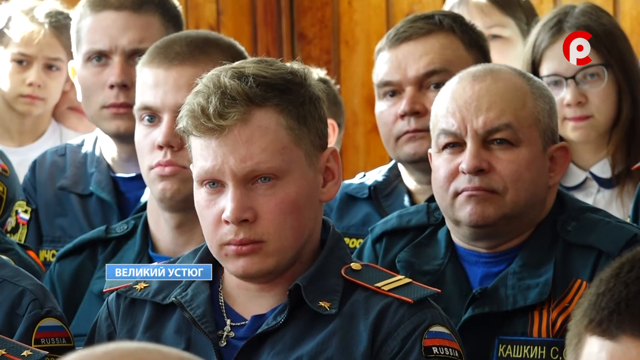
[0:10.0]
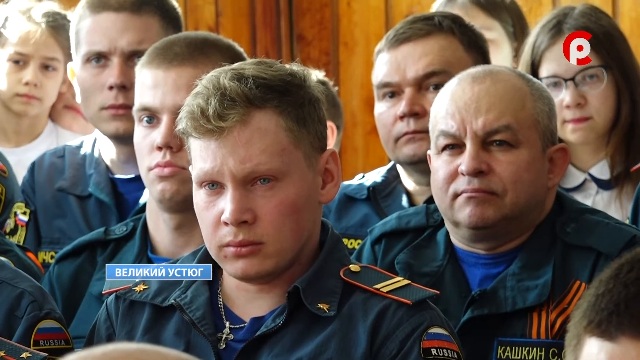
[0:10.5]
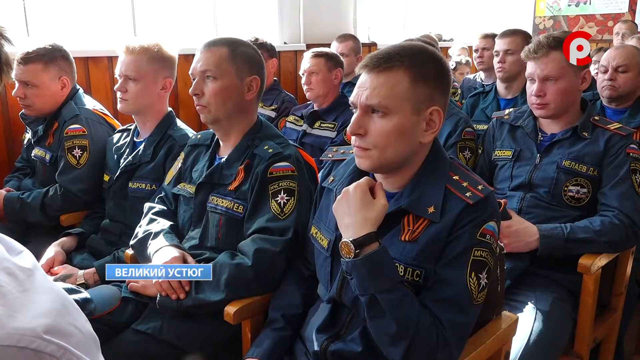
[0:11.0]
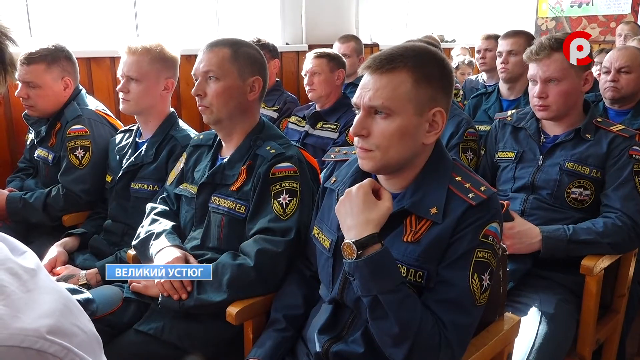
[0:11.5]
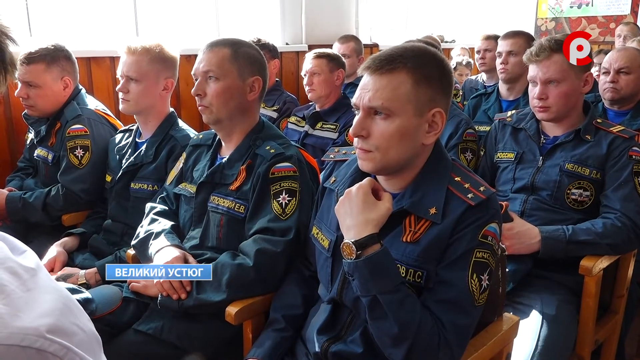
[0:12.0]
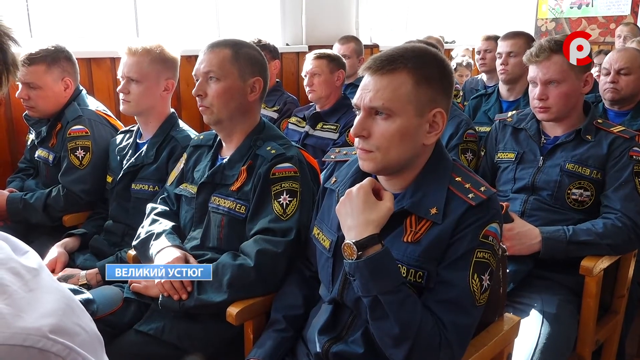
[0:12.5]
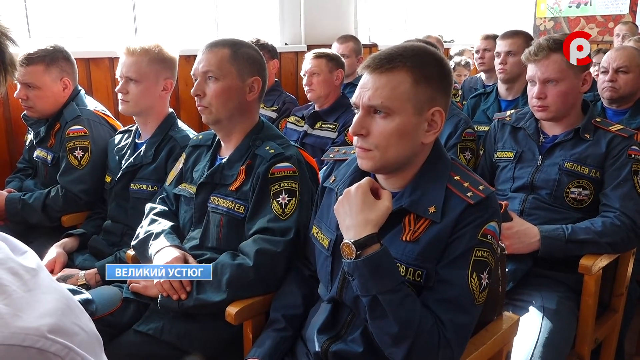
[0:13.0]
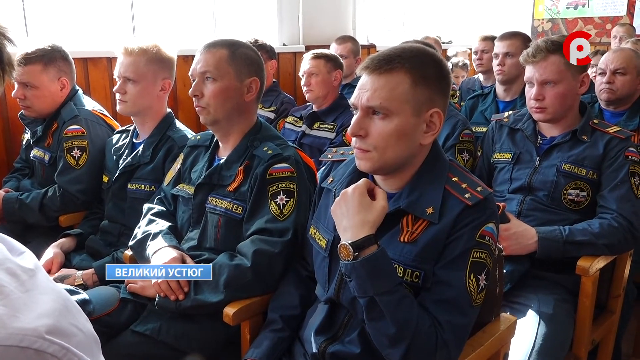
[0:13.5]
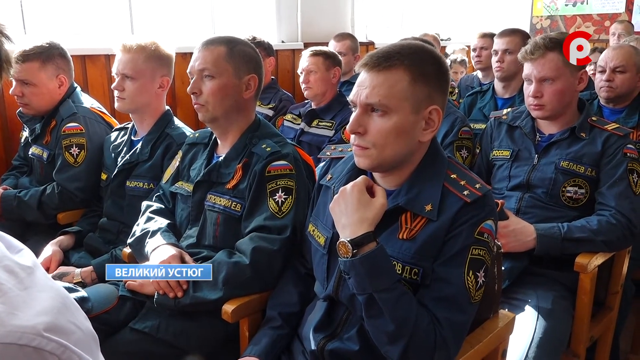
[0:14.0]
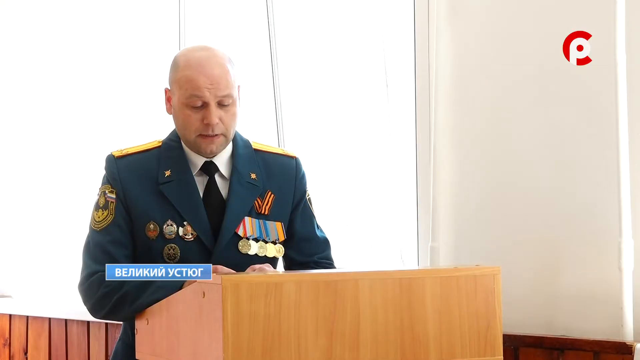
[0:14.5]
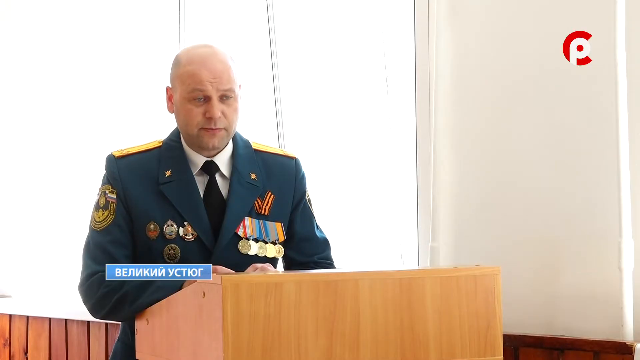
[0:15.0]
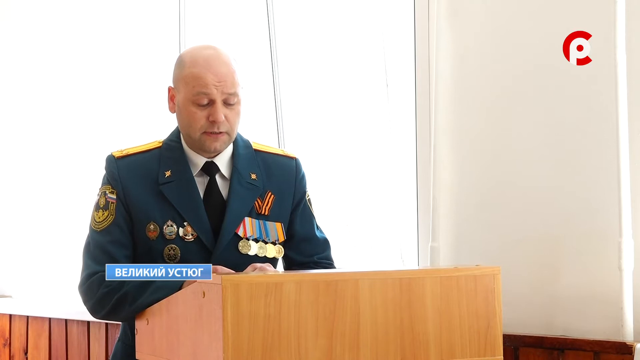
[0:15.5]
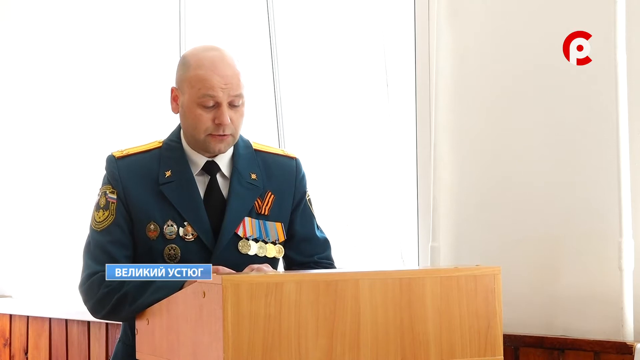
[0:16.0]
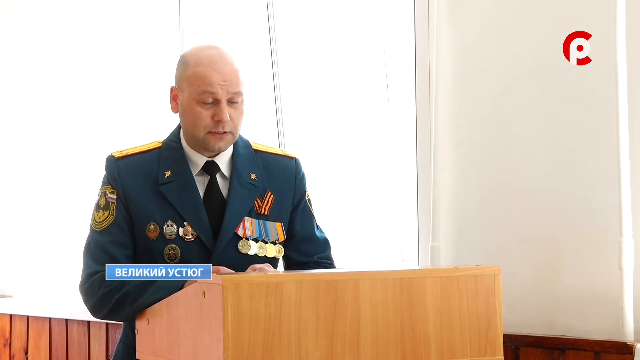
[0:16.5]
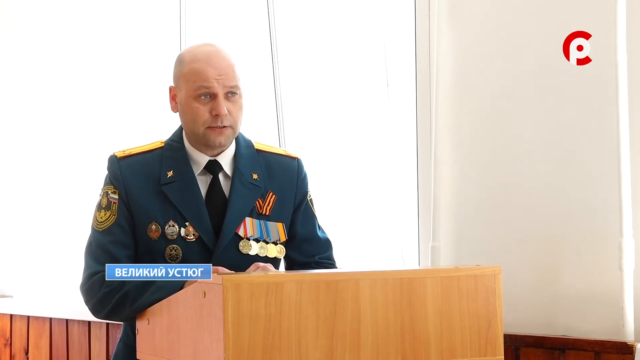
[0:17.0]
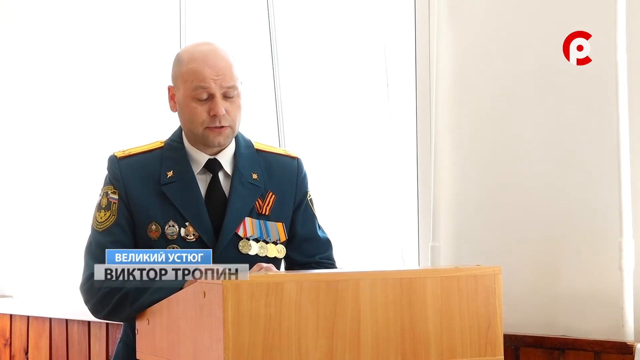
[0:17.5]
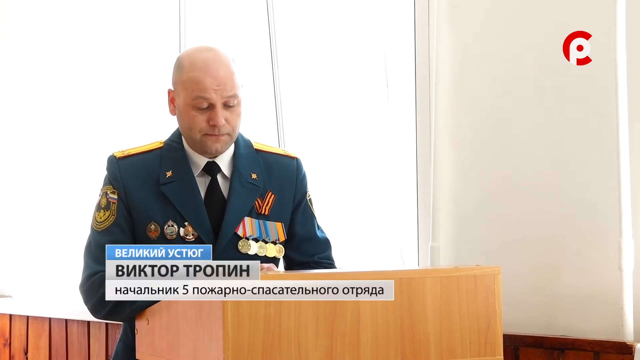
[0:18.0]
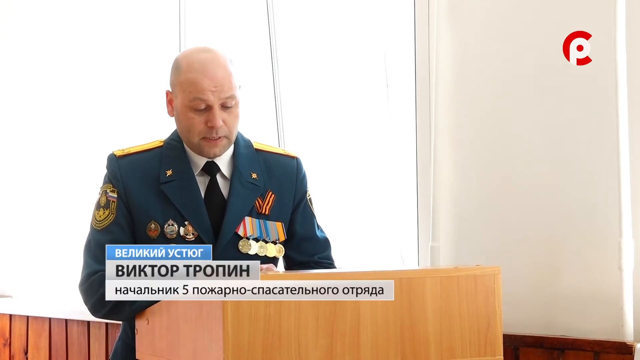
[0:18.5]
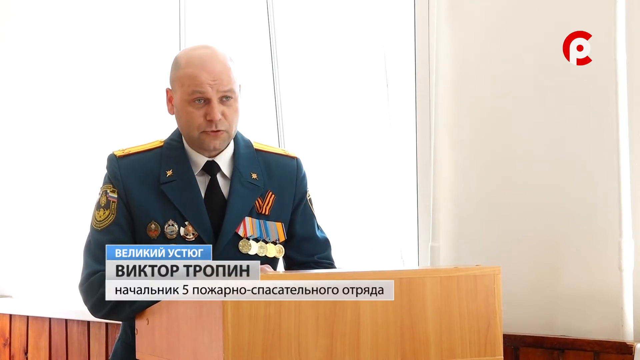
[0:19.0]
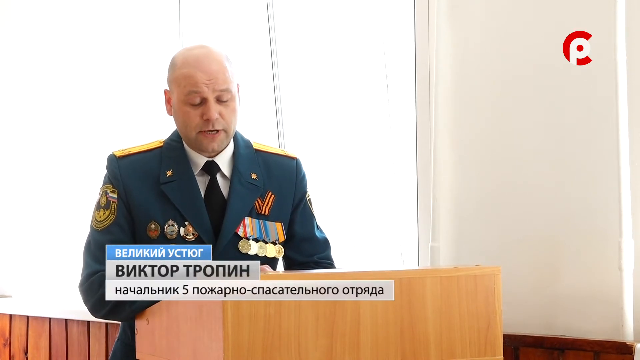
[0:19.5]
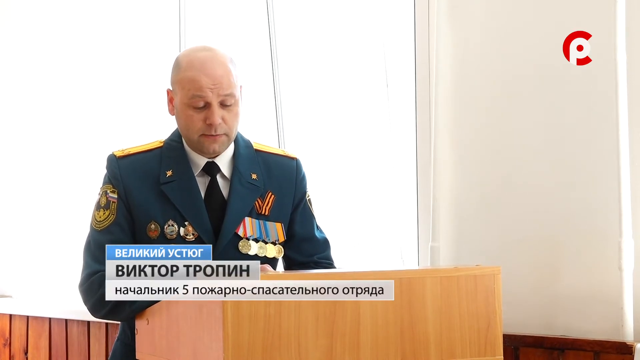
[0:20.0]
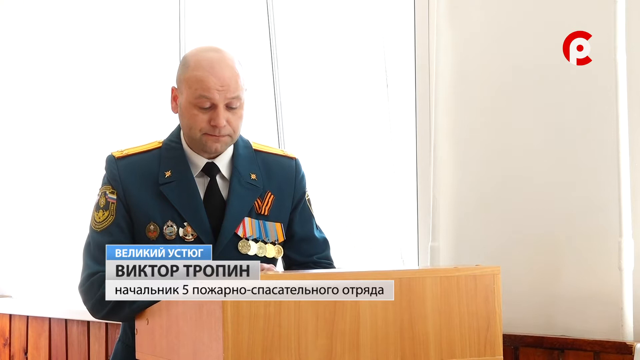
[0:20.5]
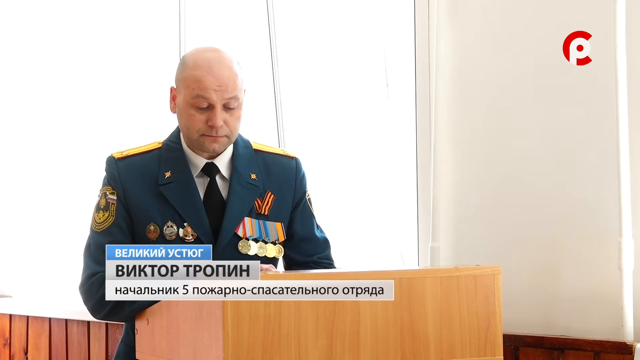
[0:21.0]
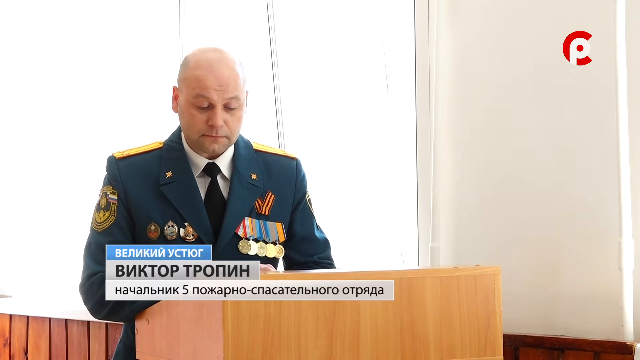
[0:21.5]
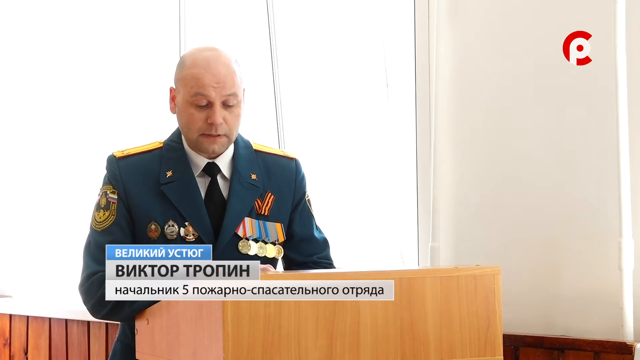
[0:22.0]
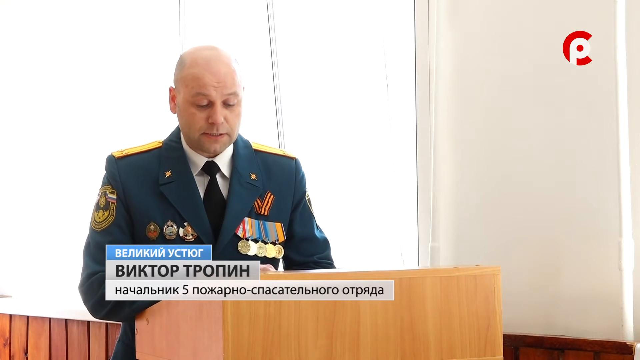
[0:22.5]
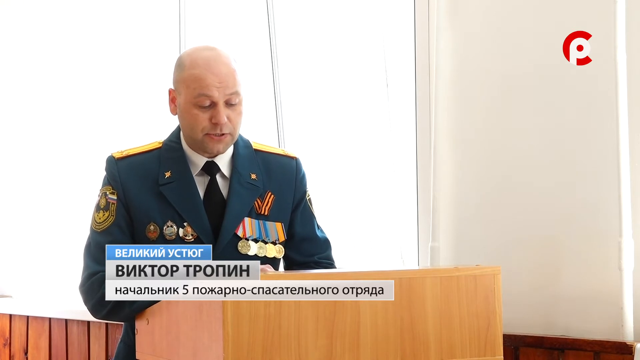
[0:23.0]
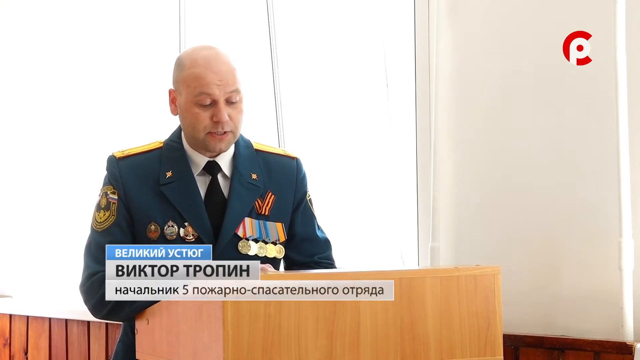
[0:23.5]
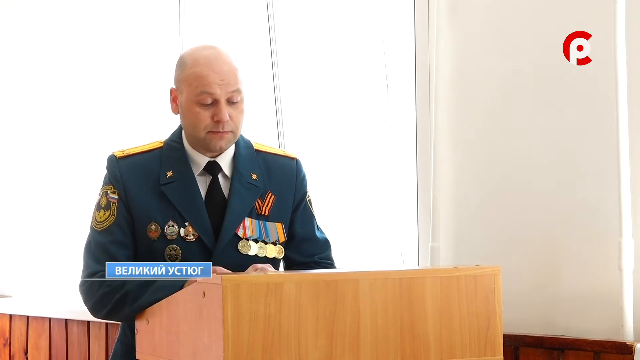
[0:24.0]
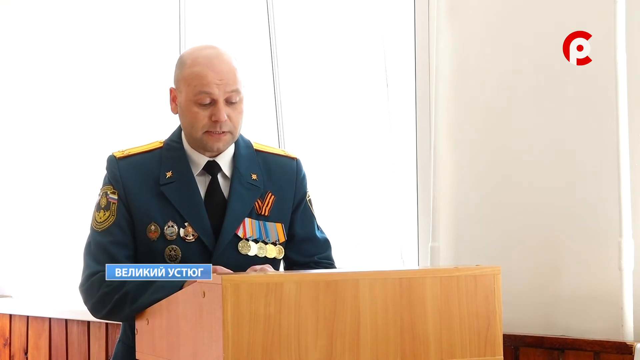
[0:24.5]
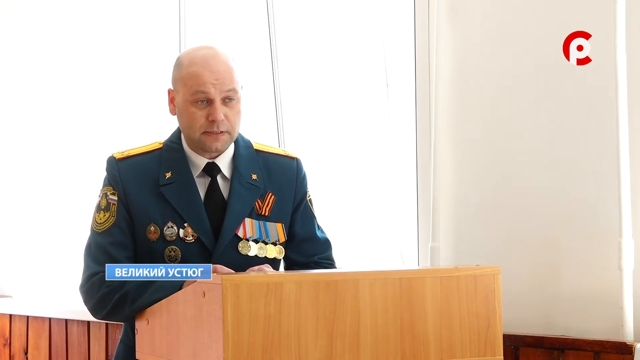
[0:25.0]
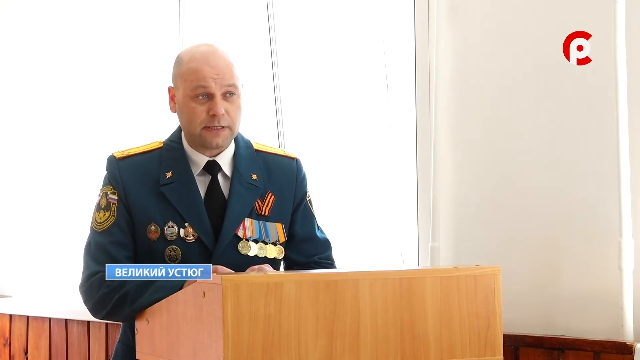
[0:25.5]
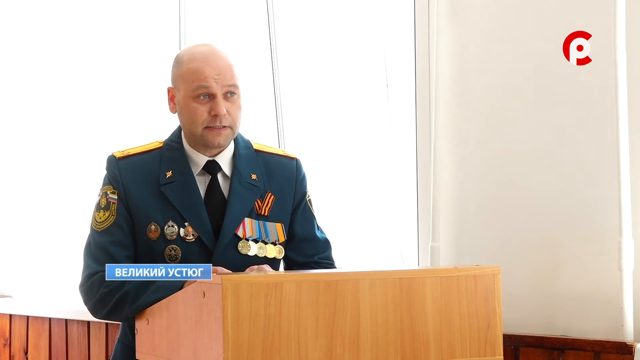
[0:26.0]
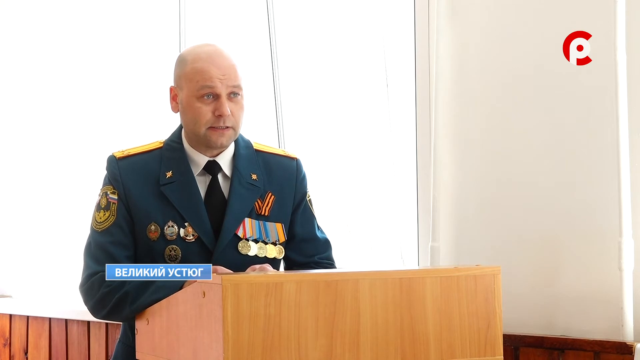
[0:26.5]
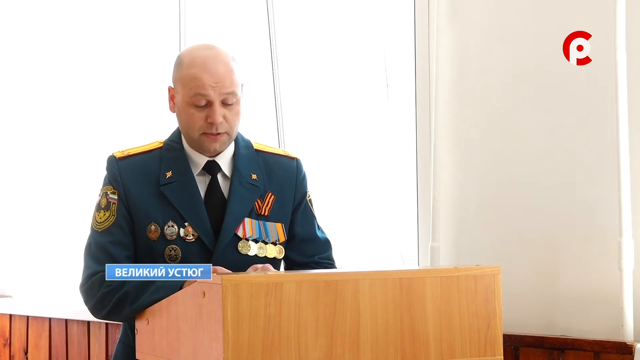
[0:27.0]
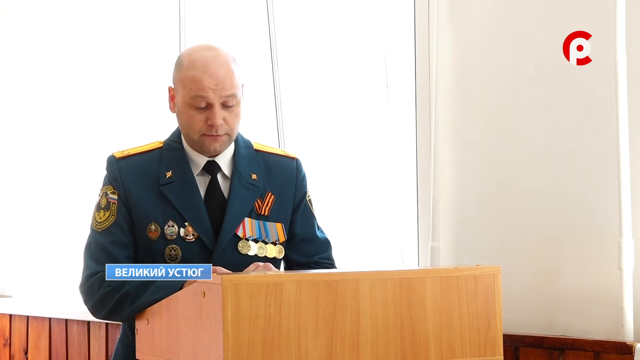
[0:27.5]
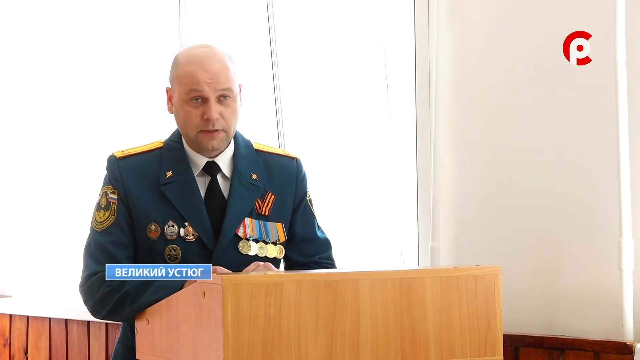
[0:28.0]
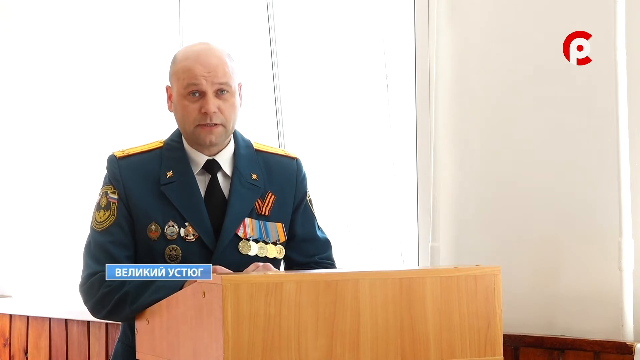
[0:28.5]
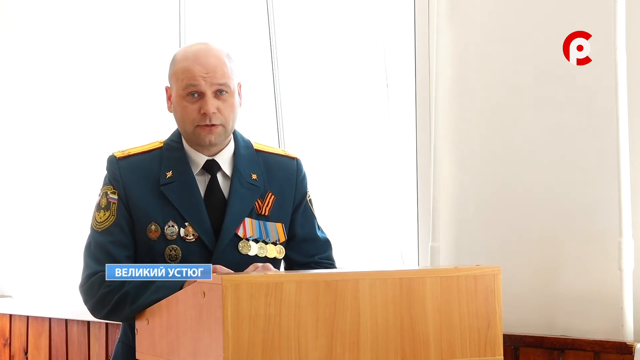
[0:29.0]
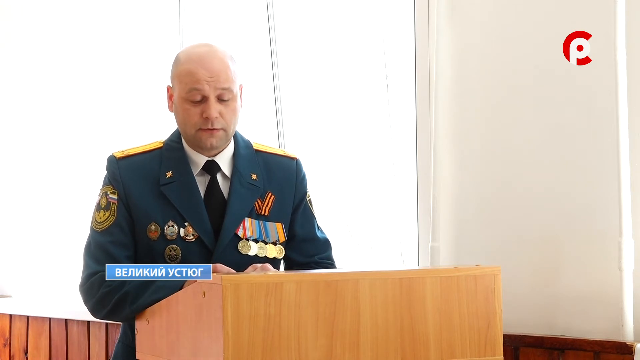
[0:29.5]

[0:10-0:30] The camera pans across the crowd for a moment, then shows a speaker. On-screen text, in a language other than English, possibly Eastern European, probably states who he is and perhaps his job title. He is a well-decorated military man in a blue military suit with a lot of medals, his head bald or shaved, apparently in his mid to late 40s. He speaks to the whole crowd, which listens attentively, and there are occasional small pans across the crowd as they pay close attention to him.